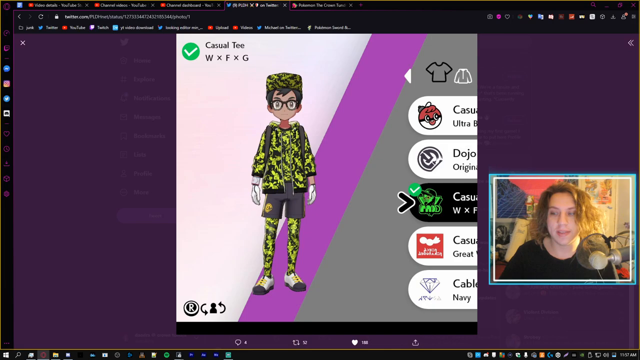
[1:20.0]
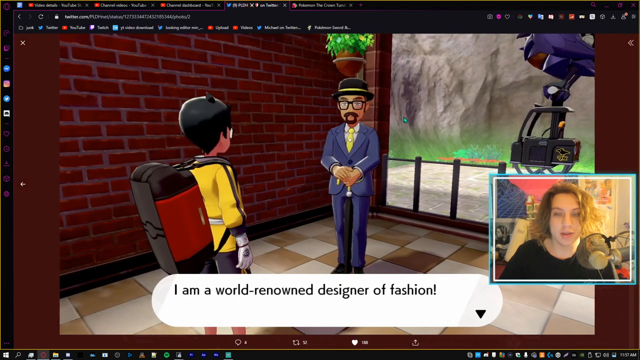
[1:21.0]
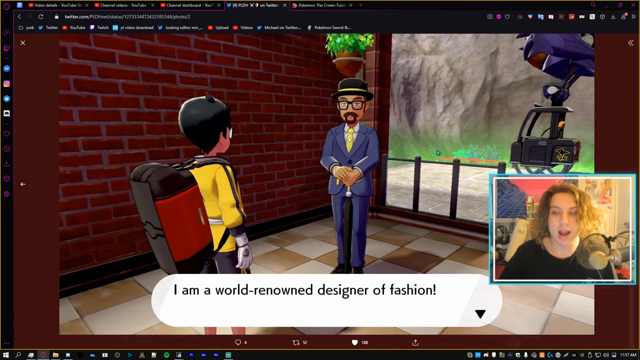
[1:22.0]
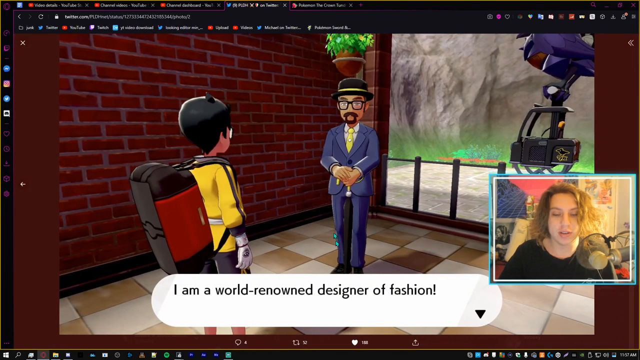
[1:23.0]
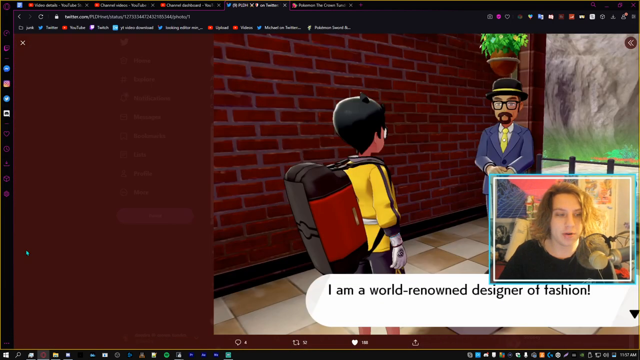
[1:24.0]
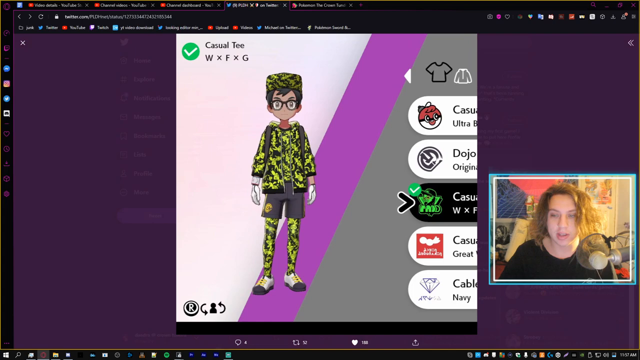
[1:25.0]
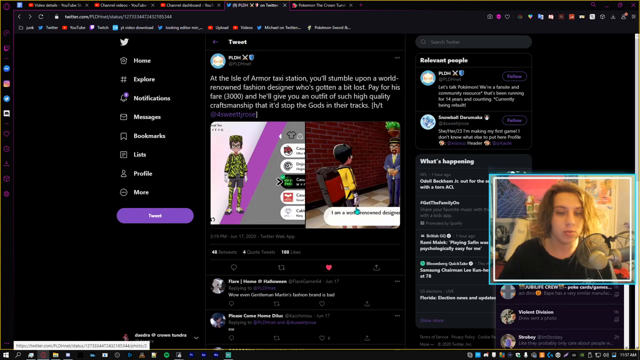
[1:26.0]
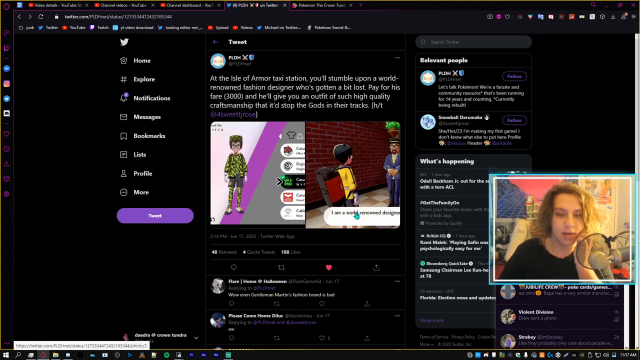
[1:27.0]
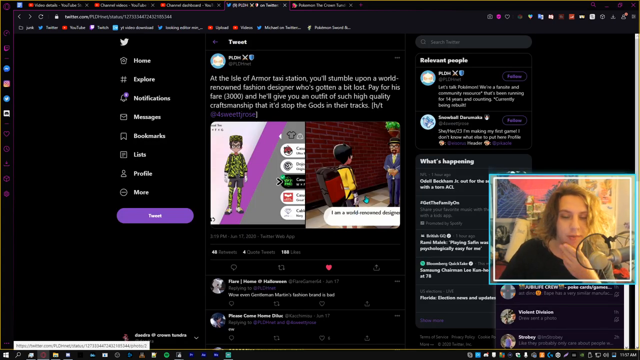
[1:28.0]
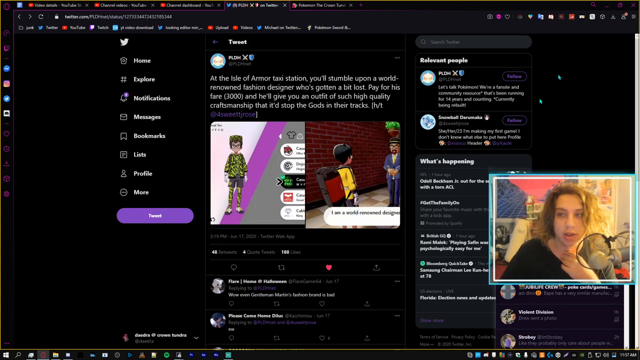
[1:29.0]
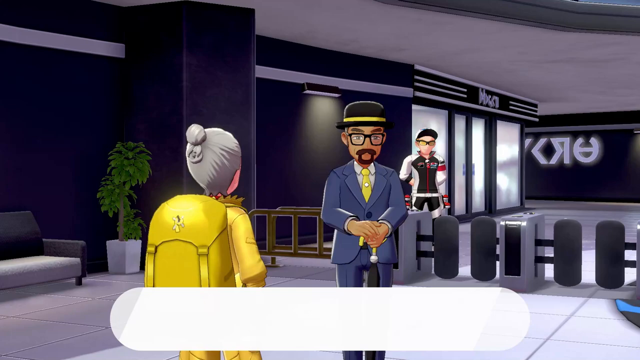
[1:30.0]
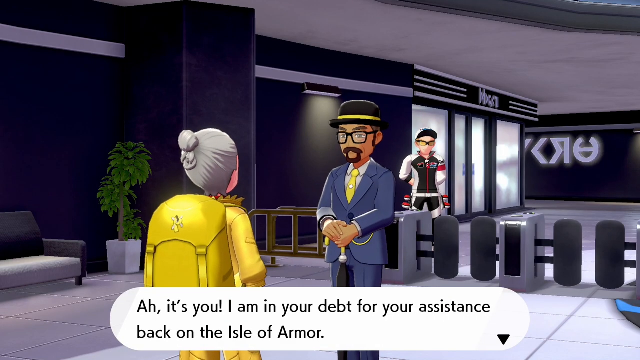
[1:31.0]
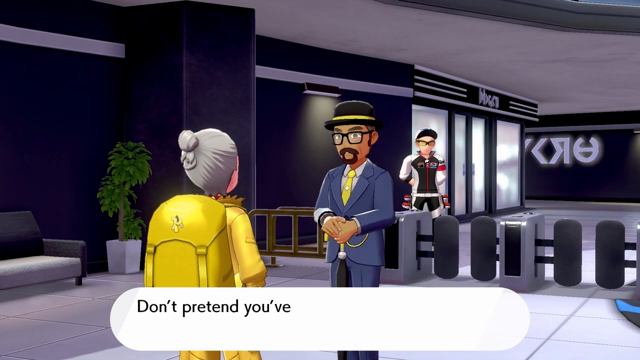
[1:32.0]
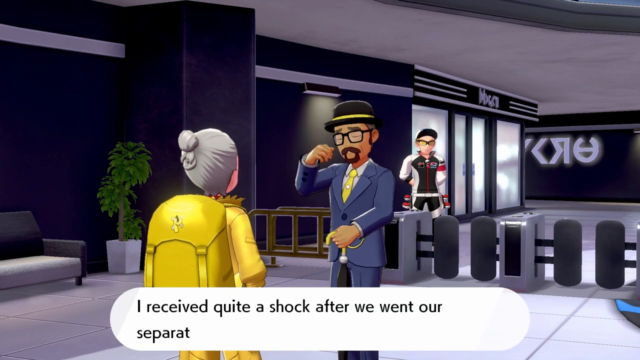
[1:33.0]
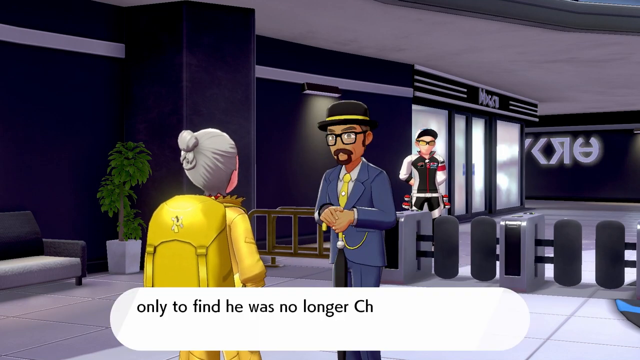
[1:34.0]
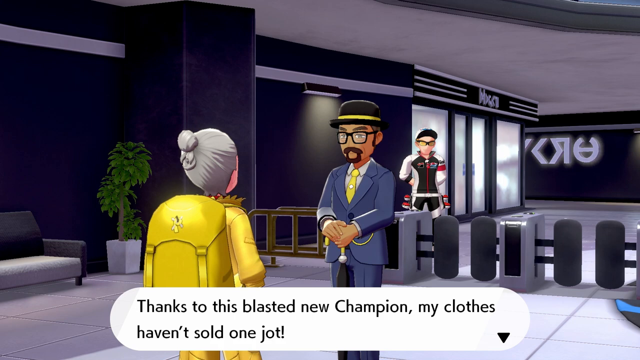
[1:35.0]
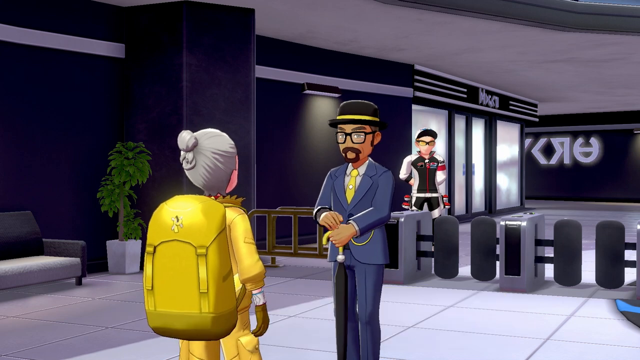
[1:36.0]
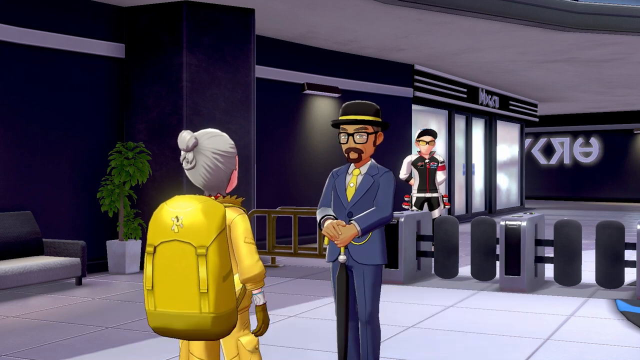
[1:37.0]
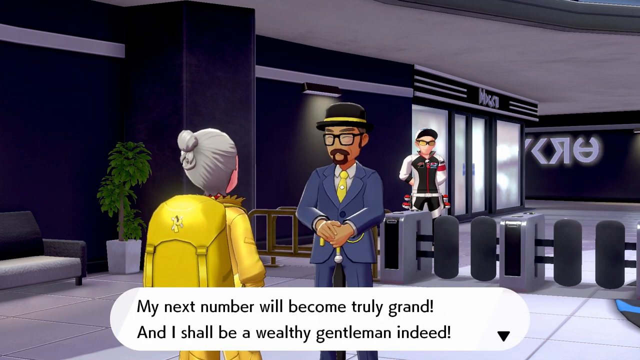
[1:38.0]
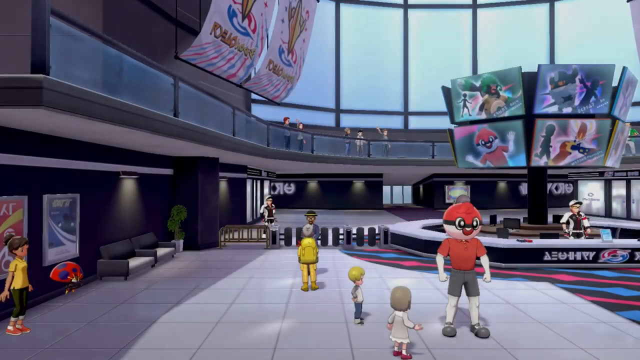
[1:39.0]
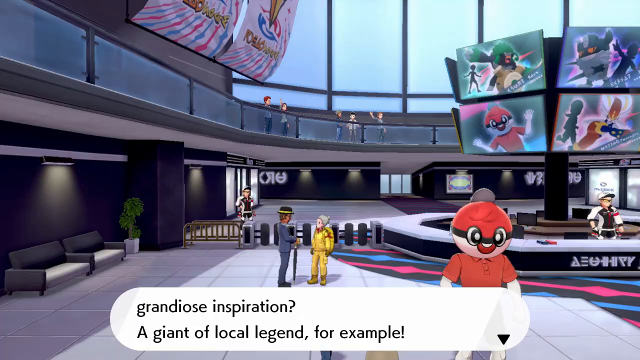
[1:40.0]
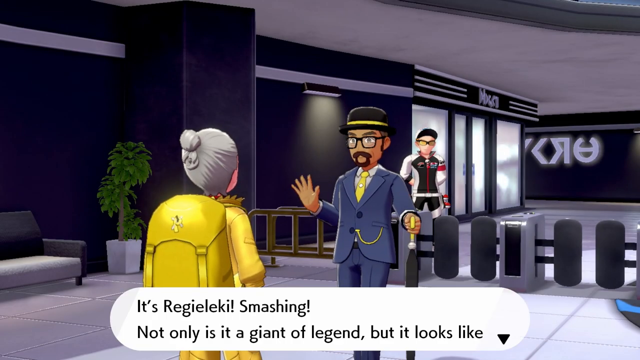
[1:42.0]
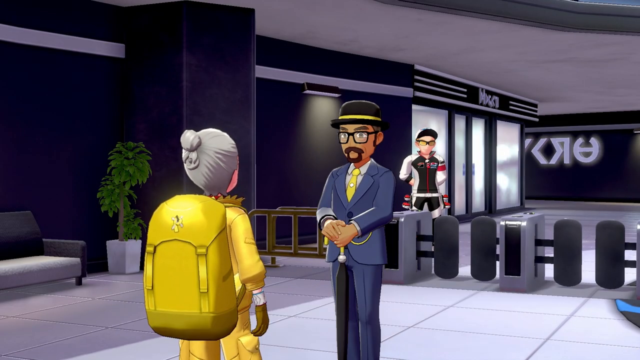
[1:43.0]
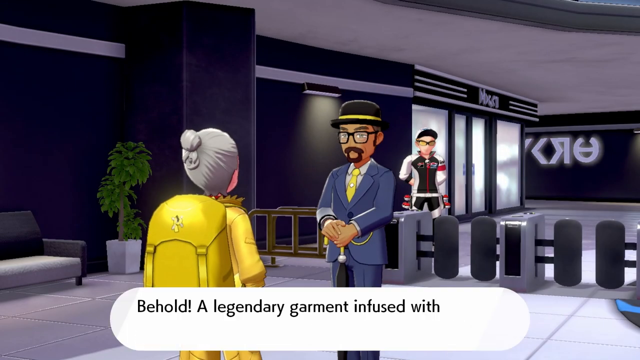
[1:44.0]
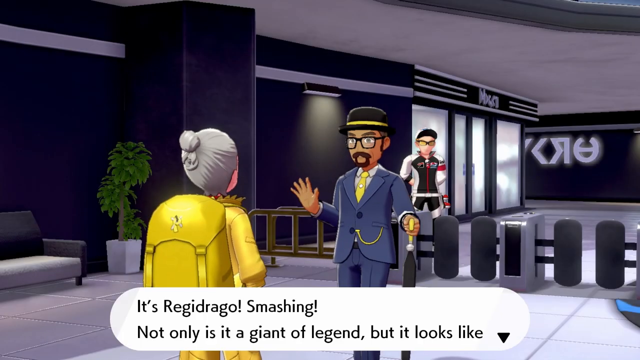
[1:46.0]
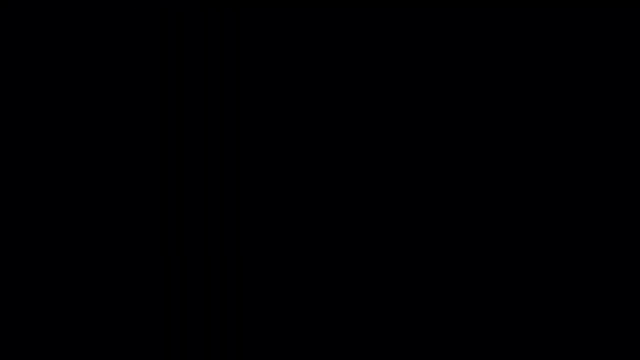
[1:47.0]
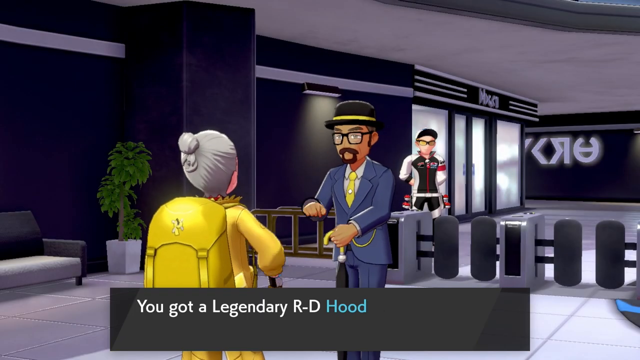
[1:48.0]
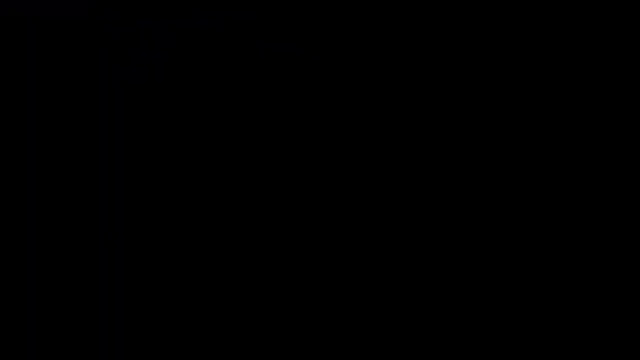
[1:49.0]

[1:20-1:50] The player's character is talking to the man in the fedora, while the YouTuber in the bottom right corner, wearing a black shirt, continues to speak into the microphone. The images change very quickly, and the same tweet from Twitter is shown. The character then runs to the man in the fedora and they continue their dialogue; the video seems sped up because things move so fast. The text is skipped through very quickly, and it is mostly the man talking. He wears a blue jacket with a yellow tie and a black and yellow fedora, and has glasses, a goatee and a mustache. The character runs and talks to him again, and they have more dialogue. The player's character is shown from behind wearing a yellow jacket and a yellow backpack. They remain in the lobby, continuing their dialogue.